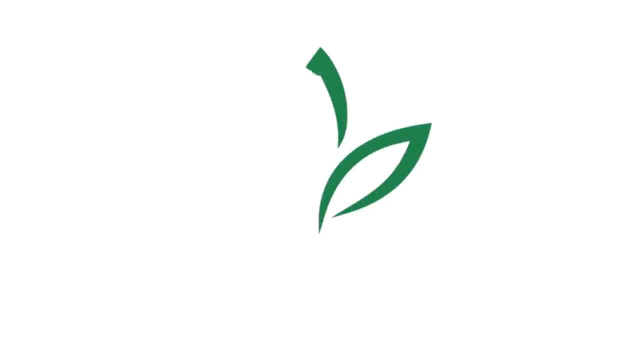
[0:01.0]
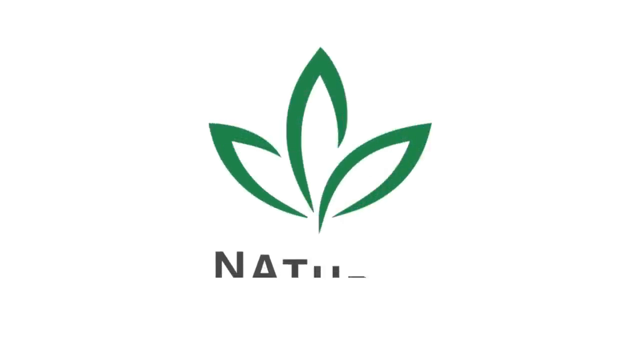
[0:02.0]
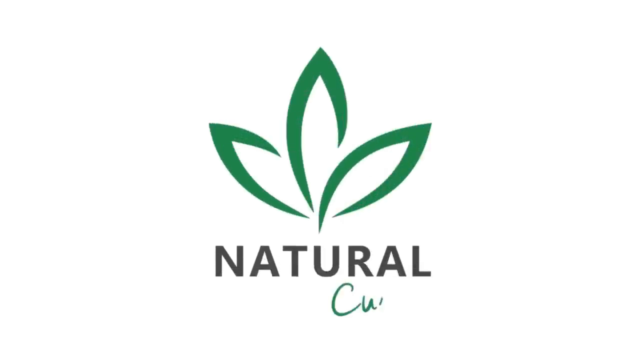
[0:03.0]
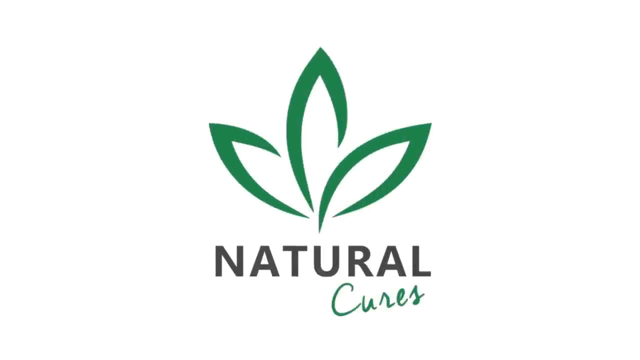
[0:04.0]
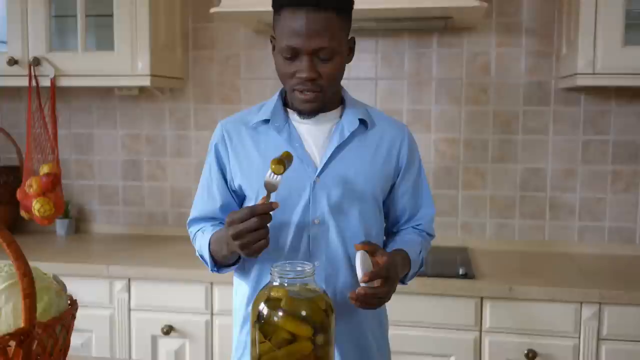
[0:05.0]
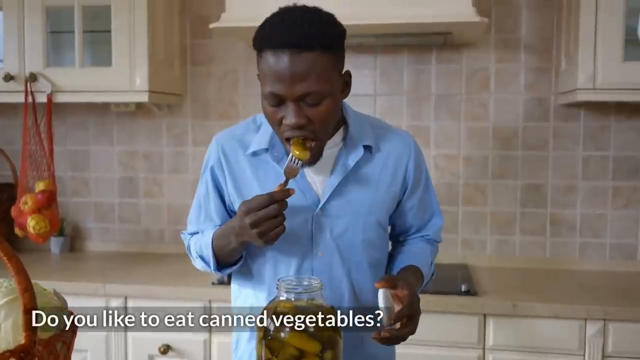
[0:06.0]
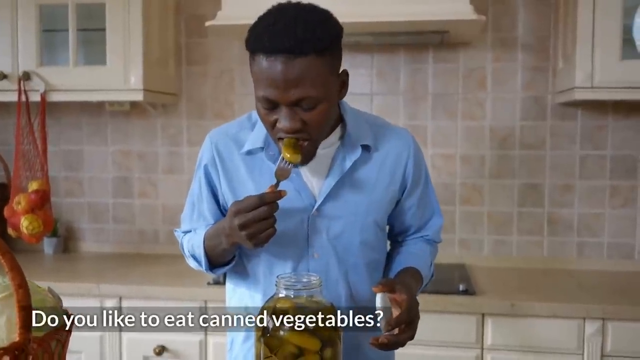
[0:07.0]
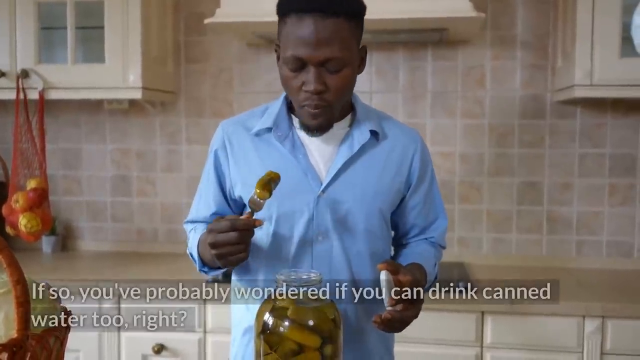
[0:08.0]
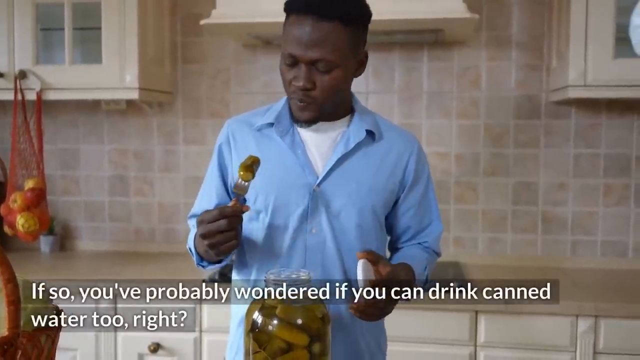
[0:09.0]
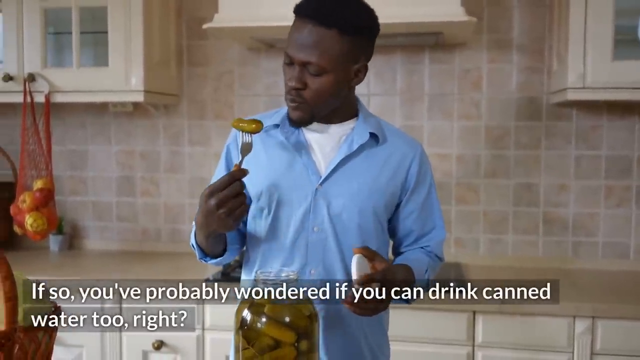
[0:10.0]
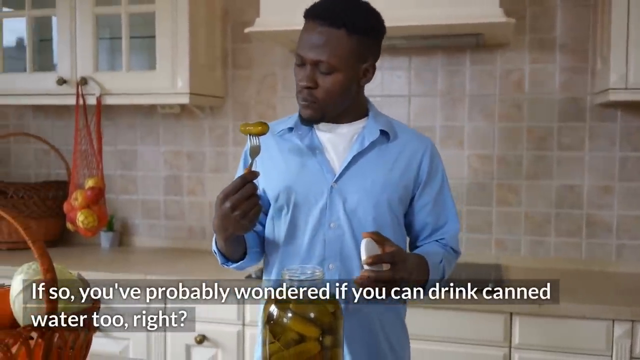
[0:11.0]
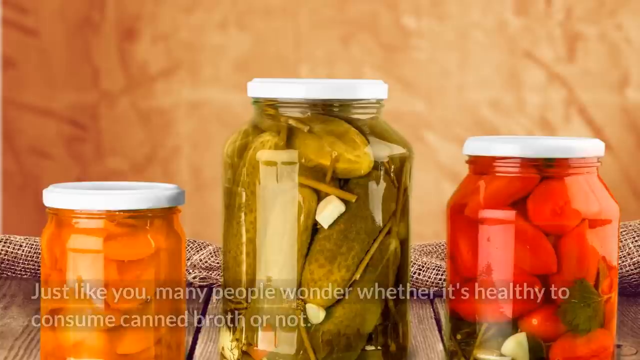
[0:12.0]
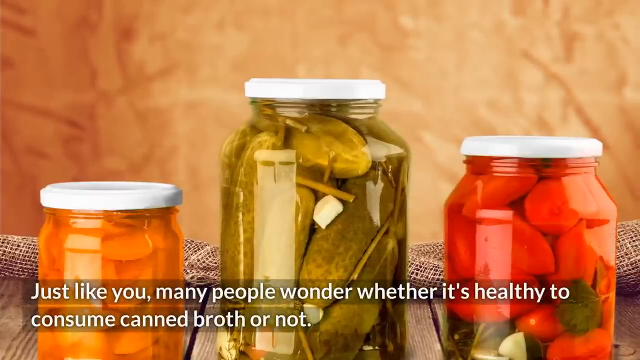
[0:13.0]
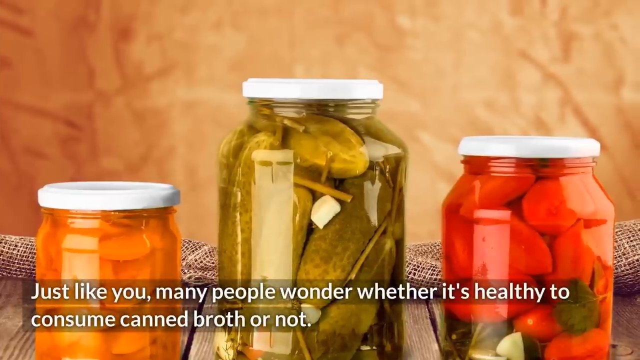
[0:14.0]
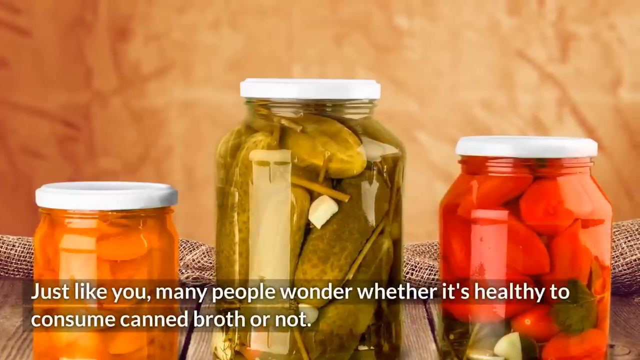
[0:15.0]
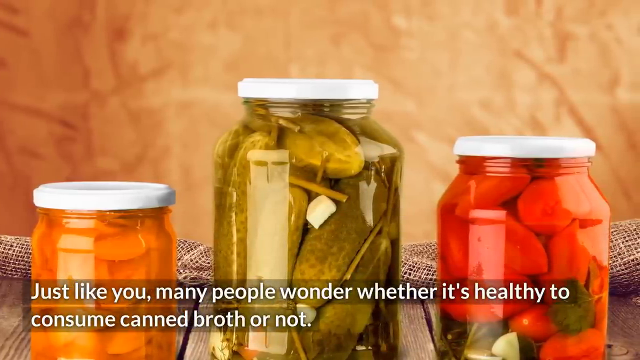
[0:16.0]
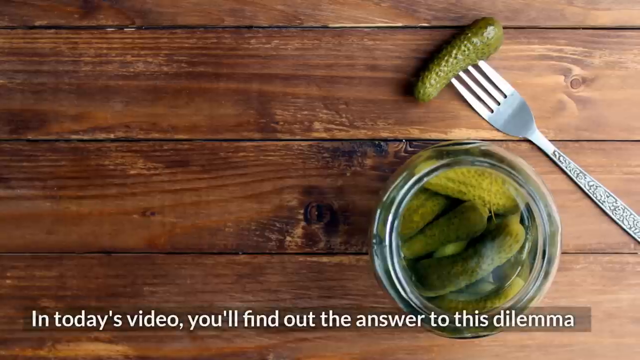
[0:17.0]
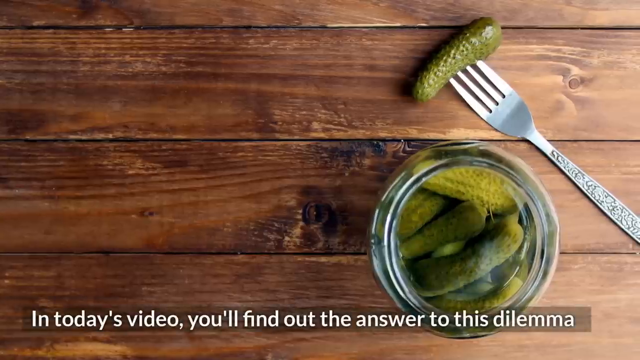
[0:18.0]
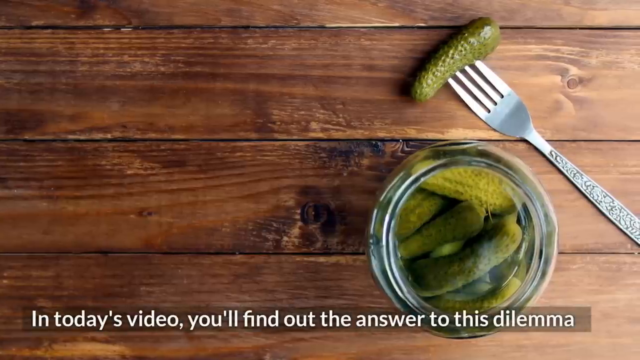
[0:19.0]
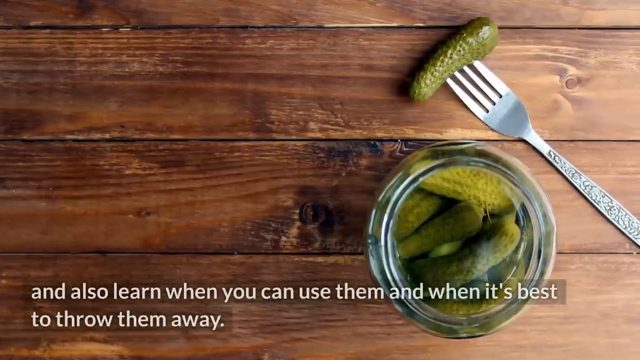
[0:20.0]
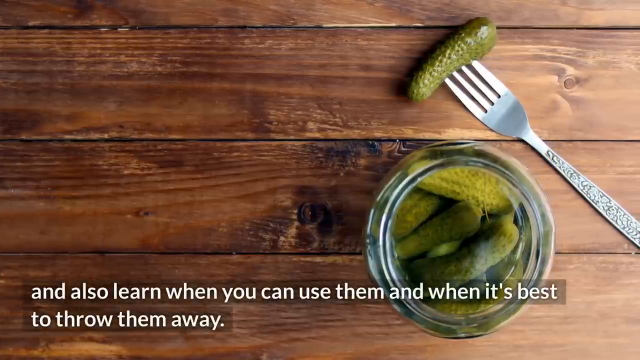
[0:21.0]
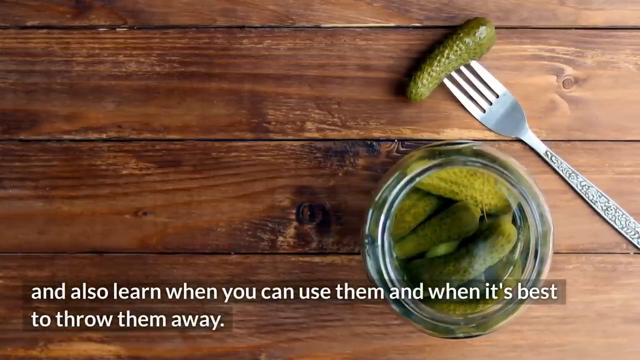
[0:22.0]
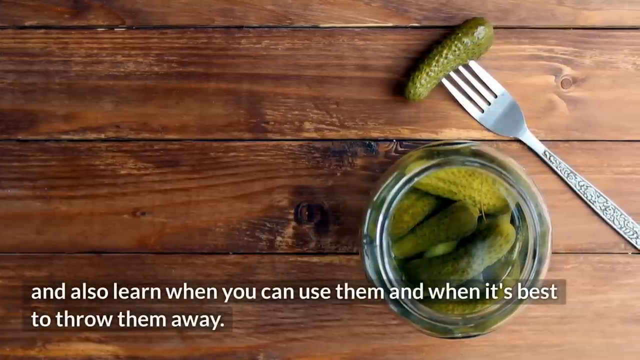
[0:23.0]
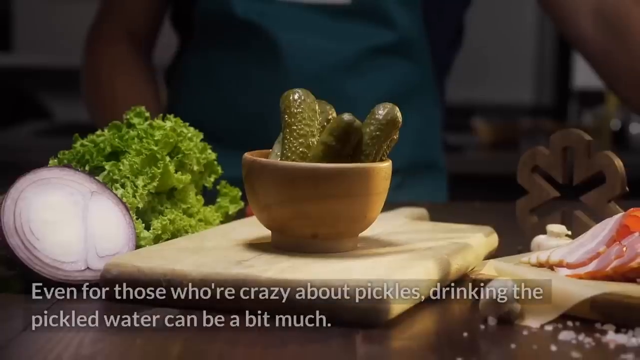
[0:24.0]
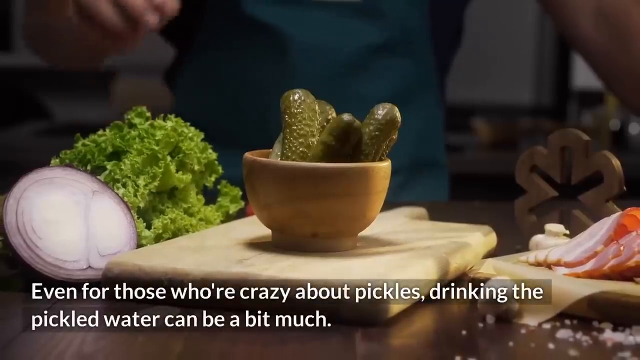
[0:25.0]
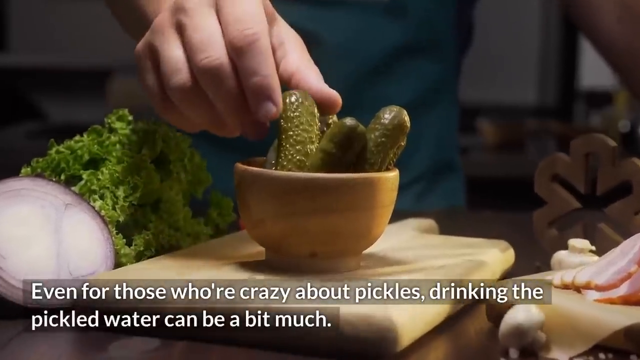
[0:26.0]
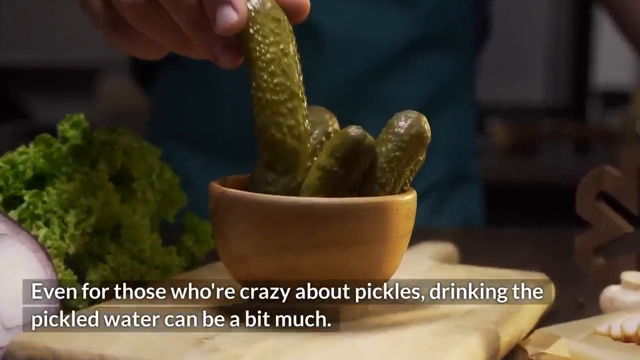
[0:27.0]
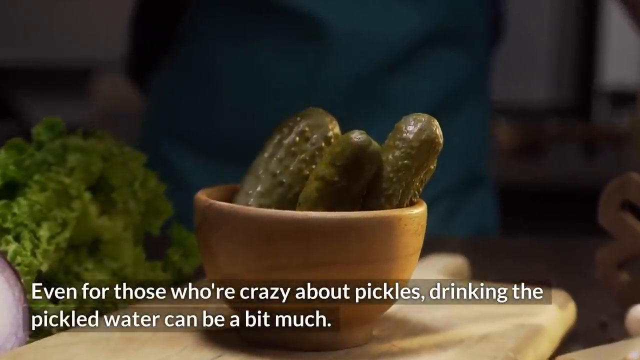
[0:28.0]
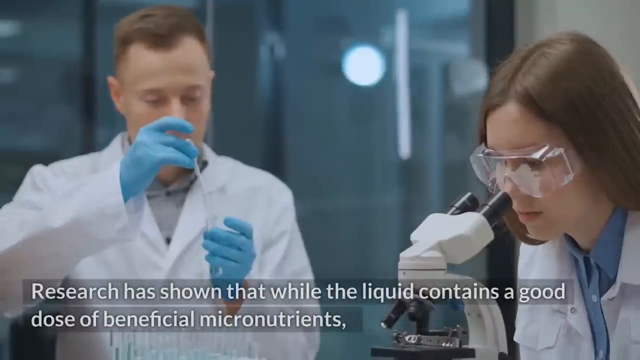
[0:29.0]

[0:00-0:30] A man inside a kitchen eats a pickle out of a jar, smiling and nodding his head at it. A caption asks whether you've ever wondered if you can drink canned water. The scene changes to three different jars of food, with the caption "just like you, many people wonder whether it's healthy to consume canned broth or not." The next shot reads "in today's video, you'll find out the answer to this dilemma" and shows a picture of a fork holding a pickle. Next, pickles are in a bowl, and a man comes in from behind it and picks up one of the pickles. The following shot shows two scientists, a man and a woman, looking into microscopes.